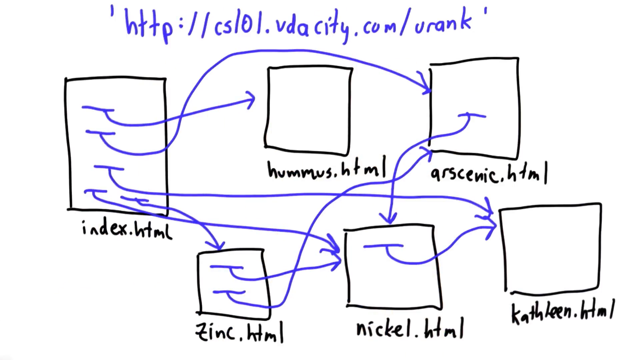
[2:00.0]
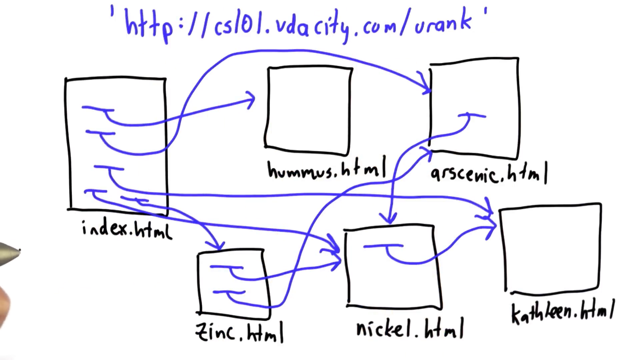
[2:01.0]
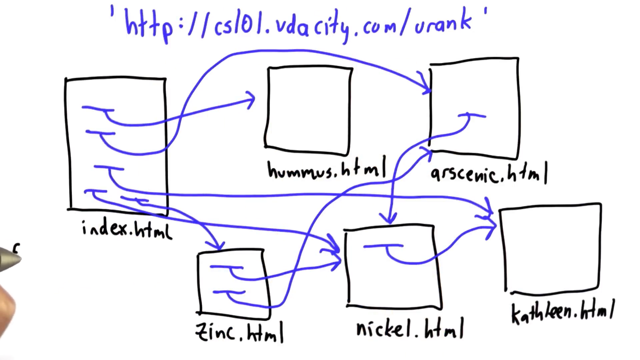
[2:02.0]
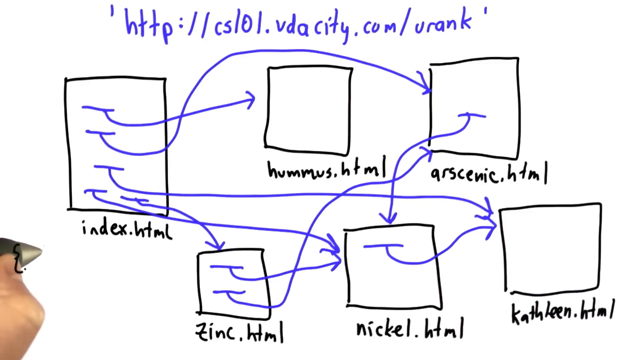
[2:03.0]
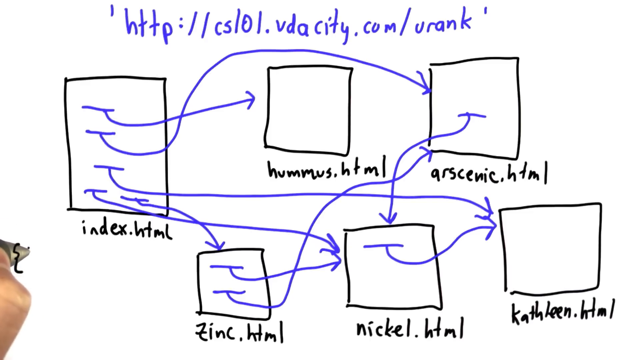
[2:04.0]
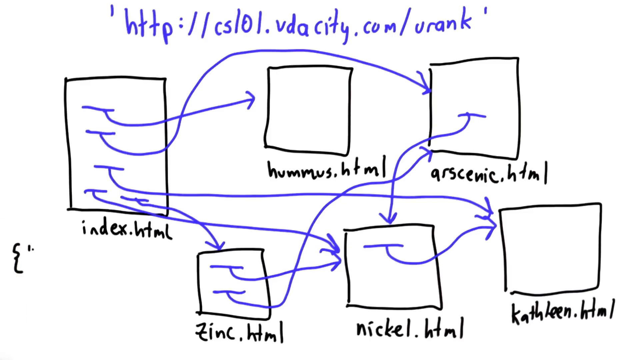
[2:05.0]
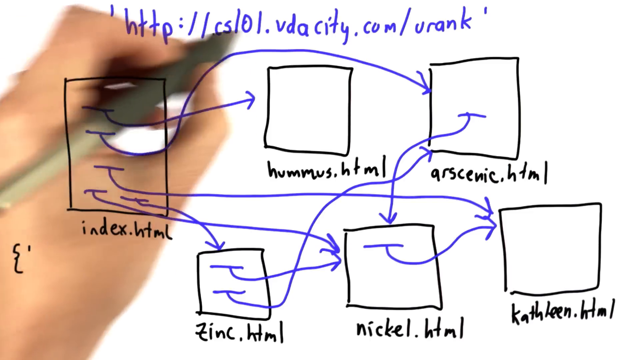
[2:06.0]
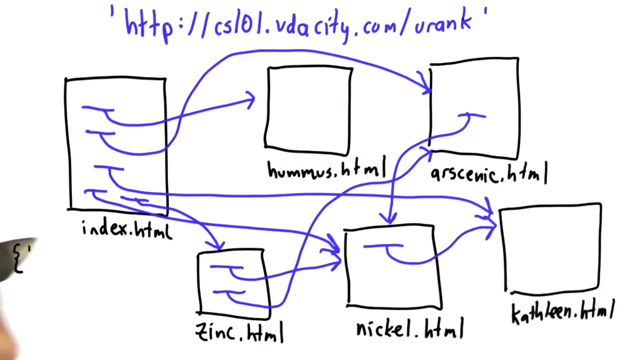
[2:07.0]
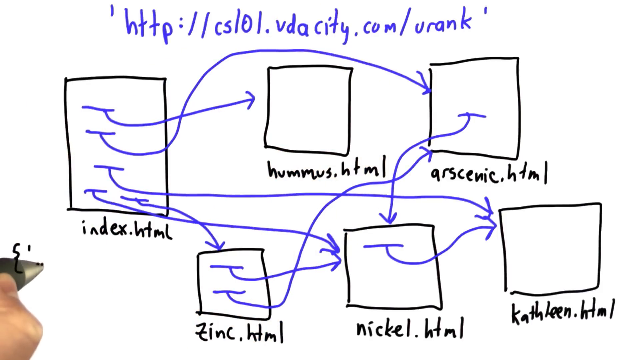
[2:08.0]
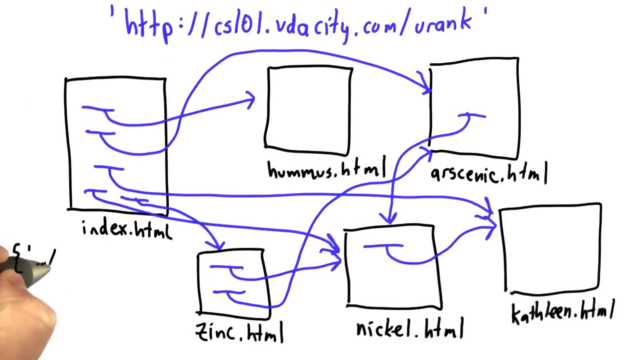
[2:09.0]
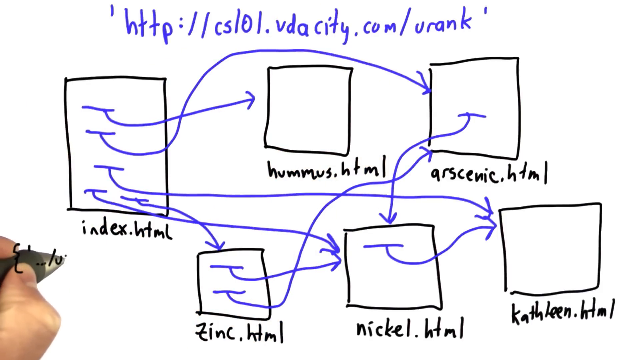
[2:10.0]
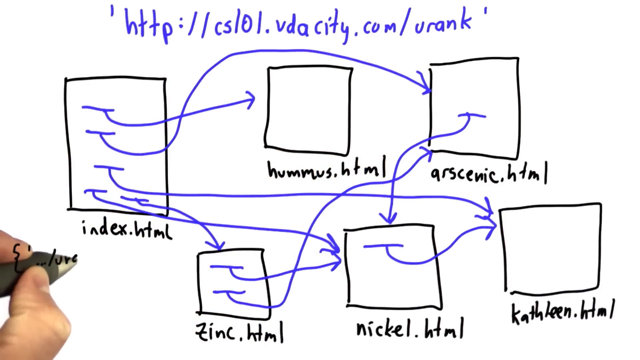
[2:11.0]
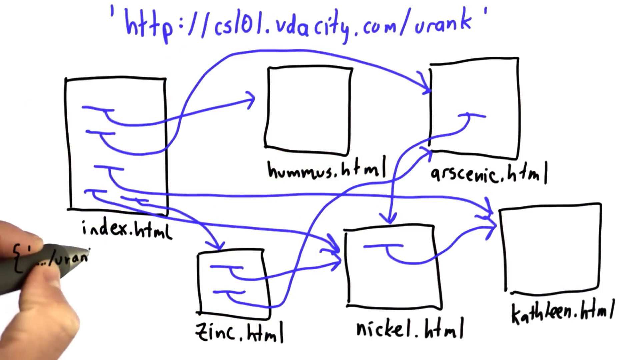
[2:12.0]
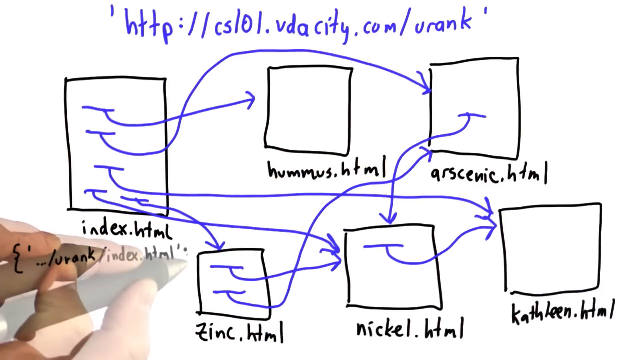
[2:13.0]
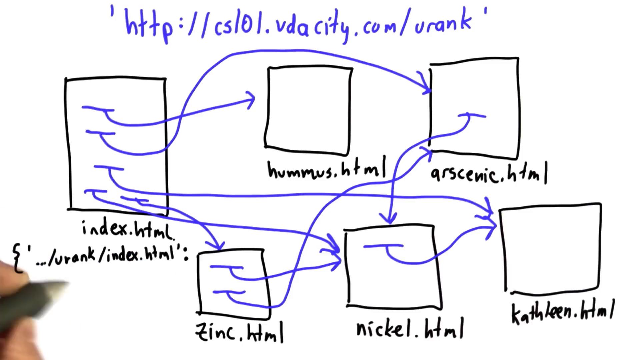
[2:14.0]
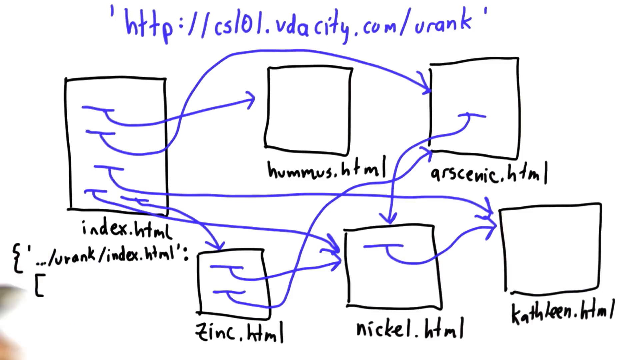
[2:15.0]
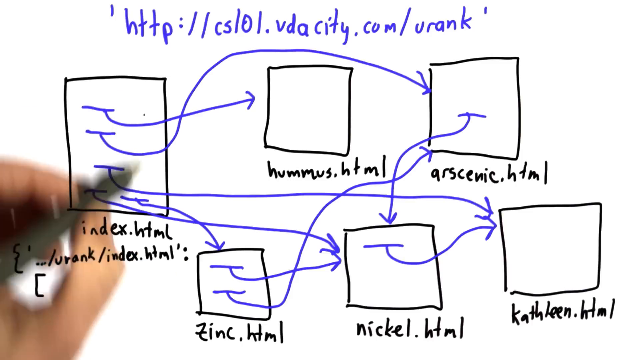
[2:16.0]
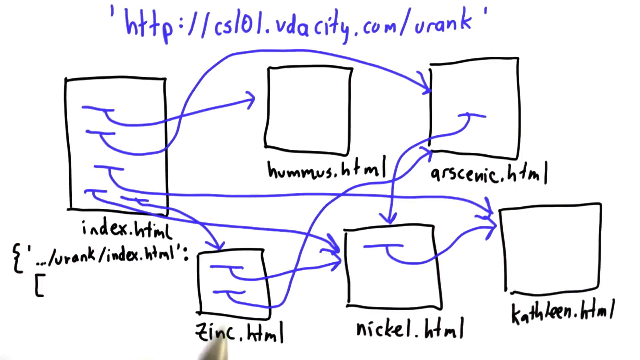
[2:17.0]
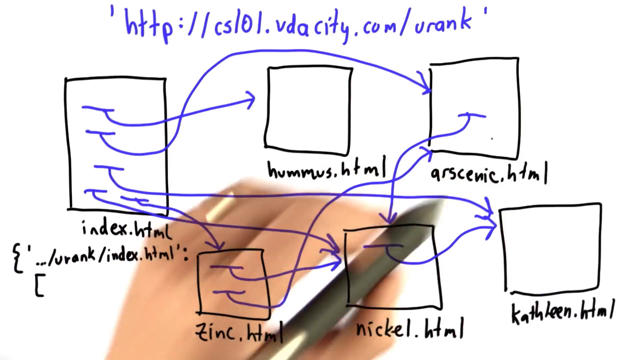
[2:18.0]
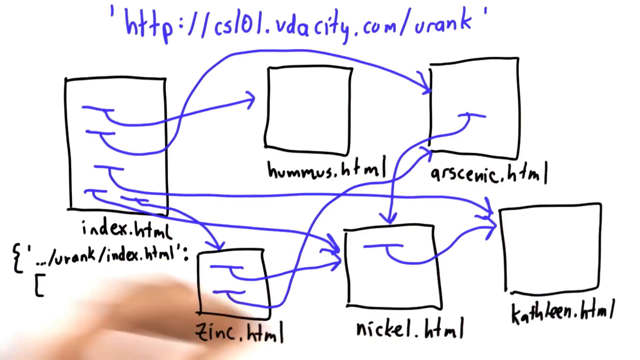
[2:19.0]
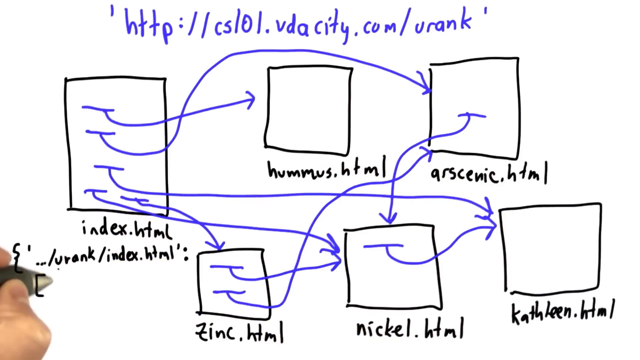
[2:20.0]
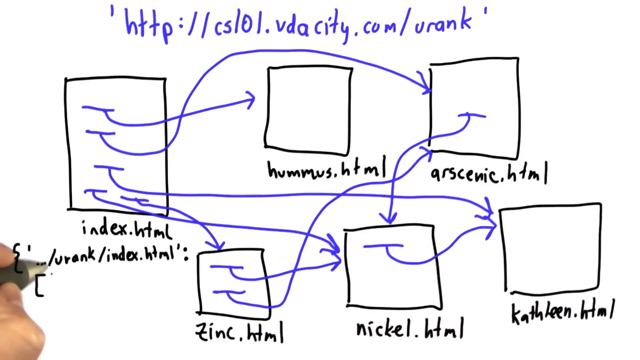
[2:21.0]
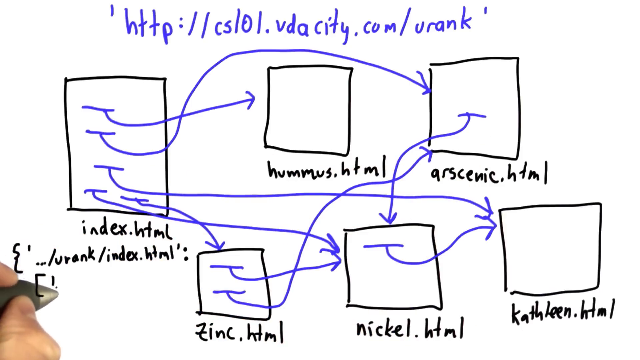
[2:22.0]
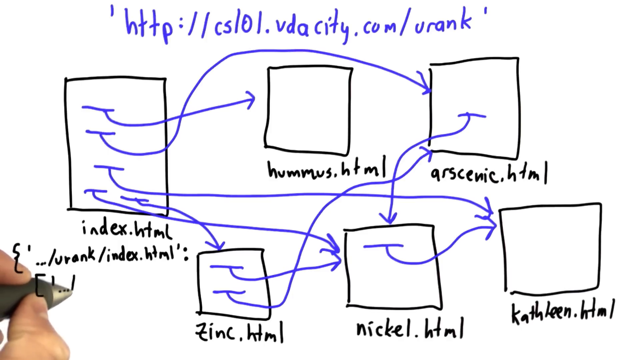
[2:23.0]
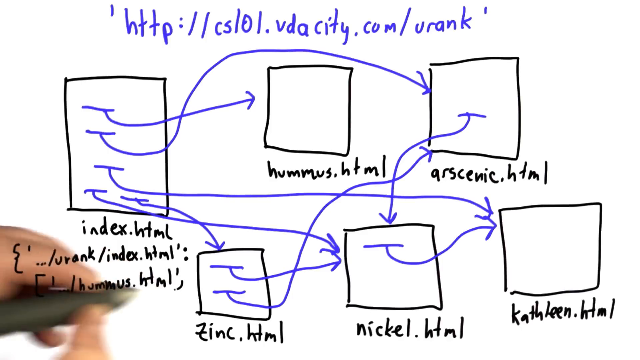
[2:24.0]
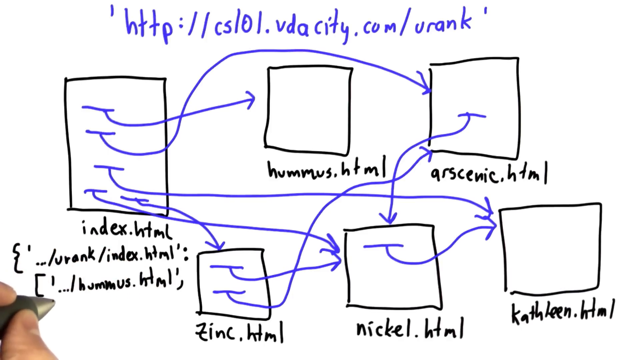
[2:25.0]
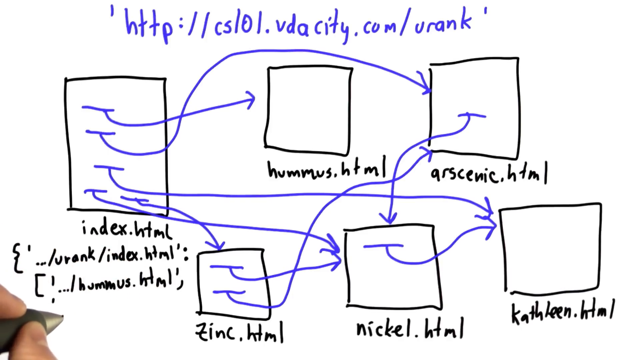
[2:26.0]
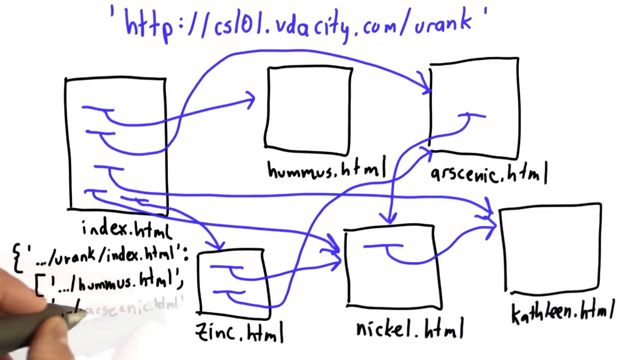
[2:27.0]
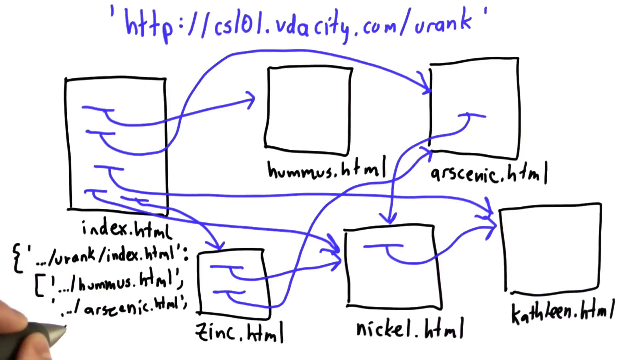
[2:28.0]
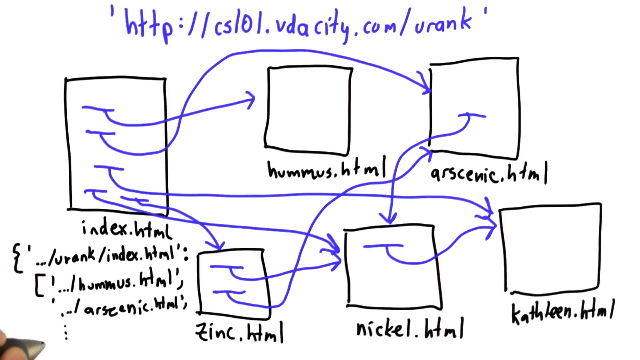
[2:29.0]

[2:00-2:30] The creation of the graph continues, with additions showing how to build the graph by creating a URL that directs to where it needs to go.